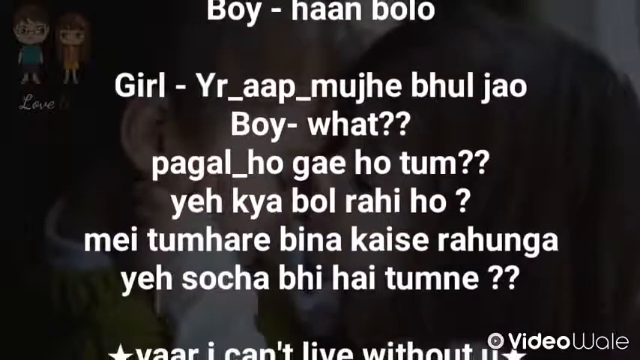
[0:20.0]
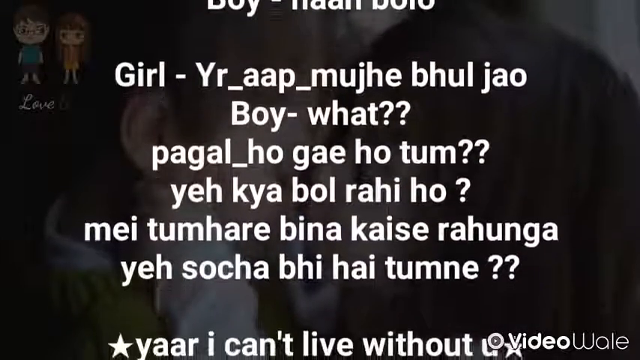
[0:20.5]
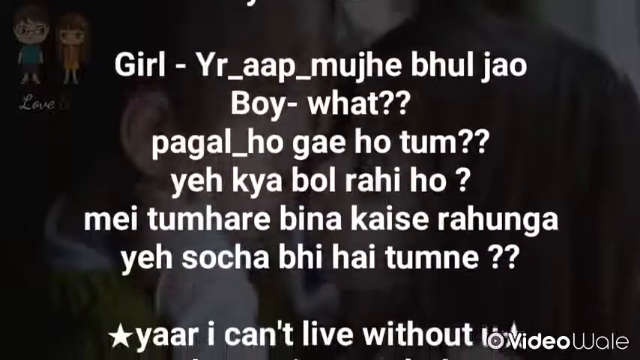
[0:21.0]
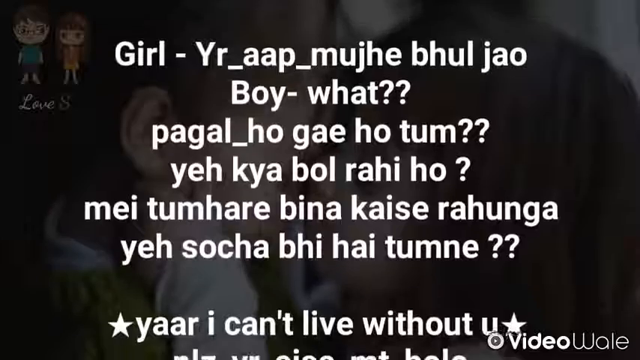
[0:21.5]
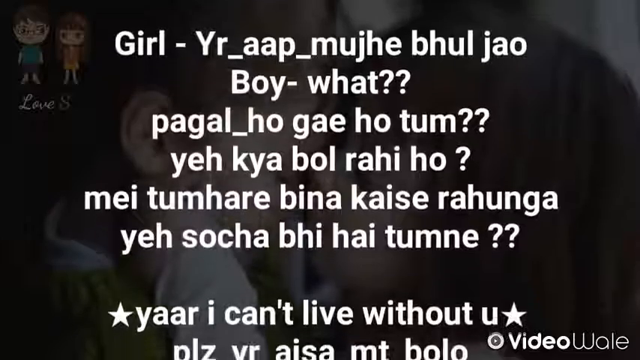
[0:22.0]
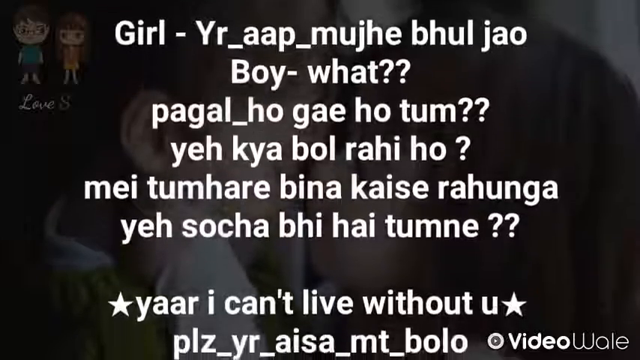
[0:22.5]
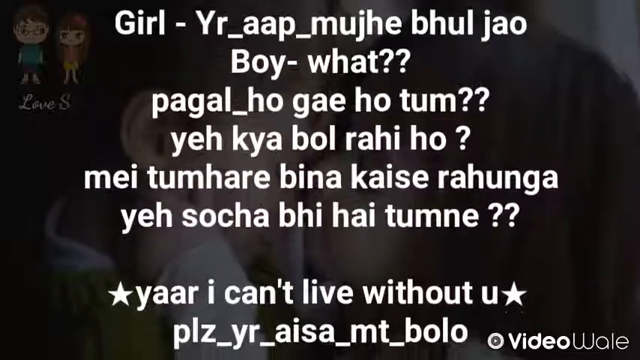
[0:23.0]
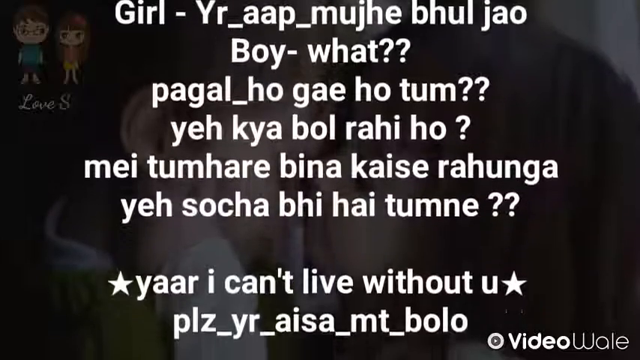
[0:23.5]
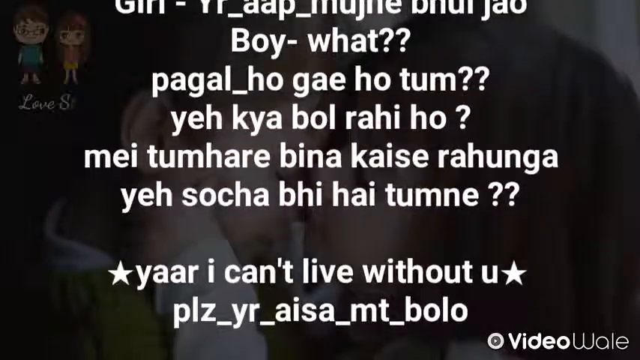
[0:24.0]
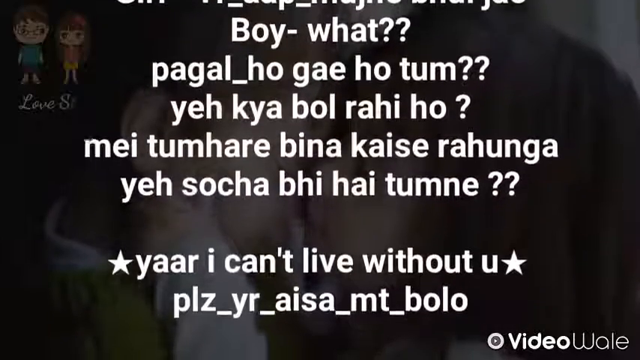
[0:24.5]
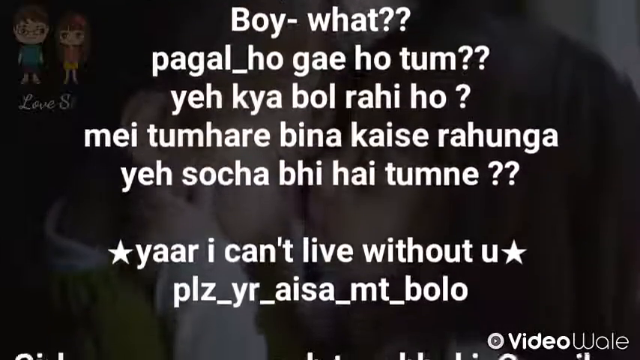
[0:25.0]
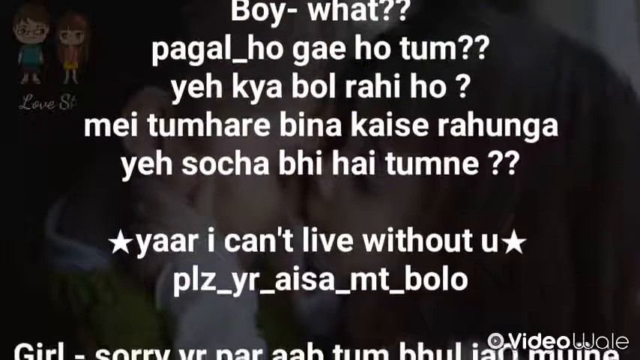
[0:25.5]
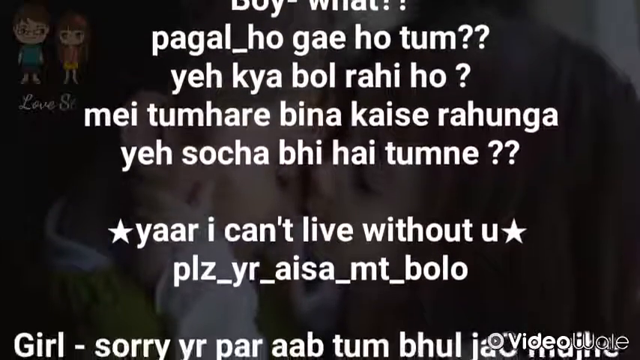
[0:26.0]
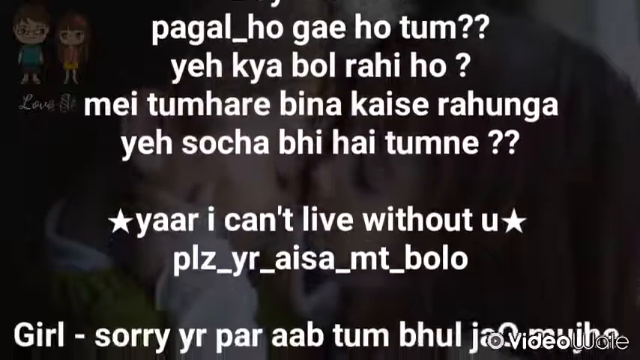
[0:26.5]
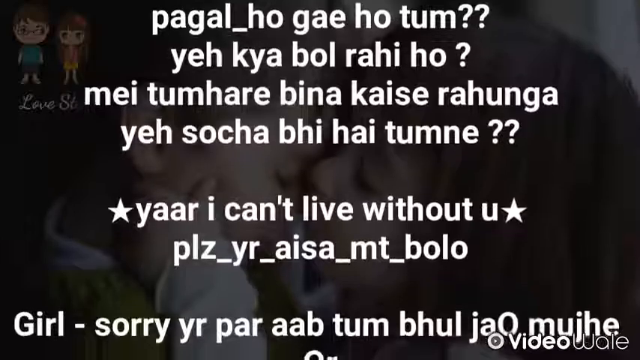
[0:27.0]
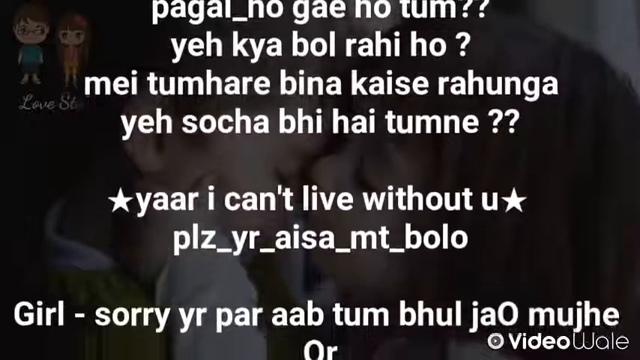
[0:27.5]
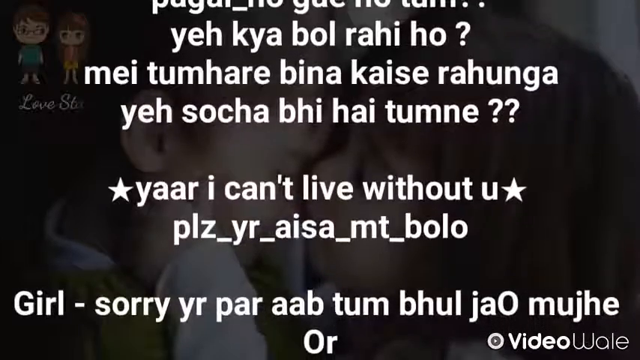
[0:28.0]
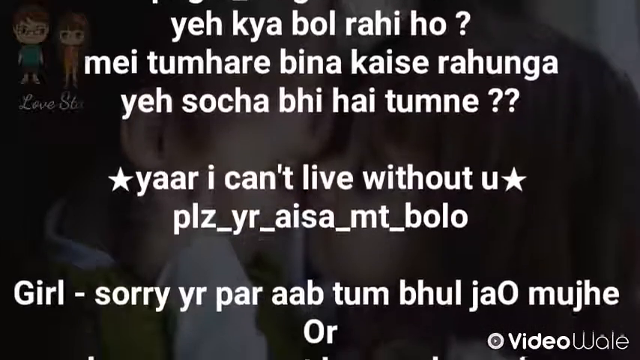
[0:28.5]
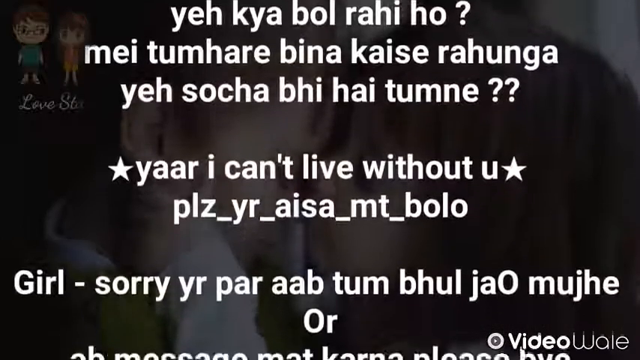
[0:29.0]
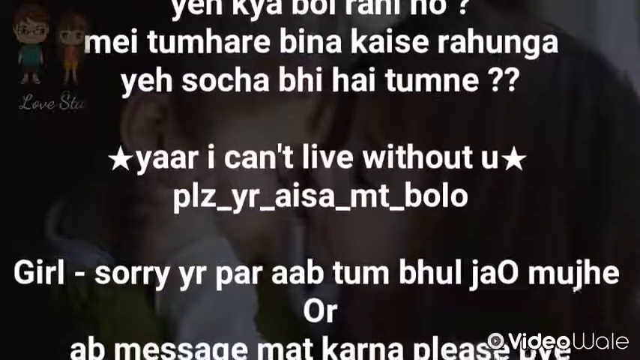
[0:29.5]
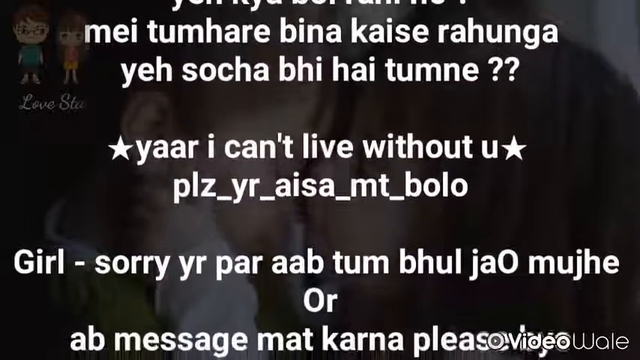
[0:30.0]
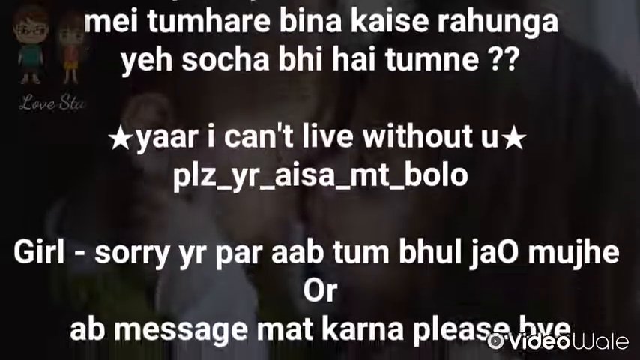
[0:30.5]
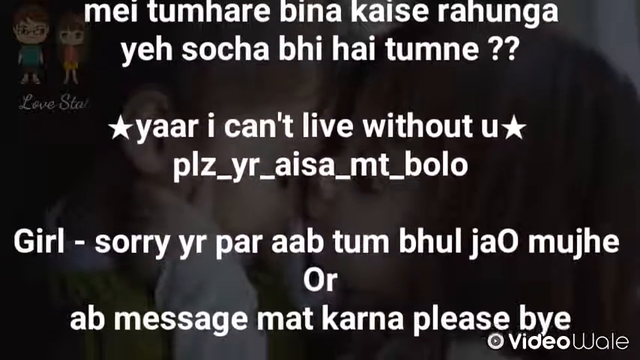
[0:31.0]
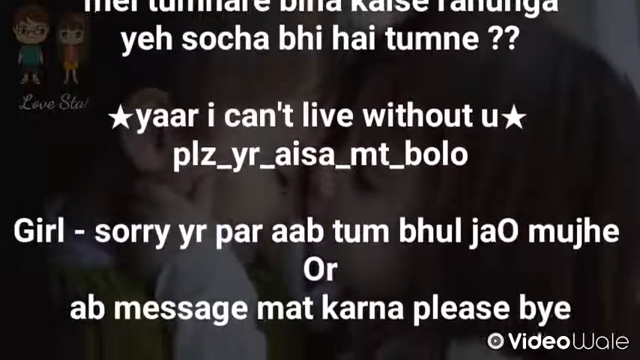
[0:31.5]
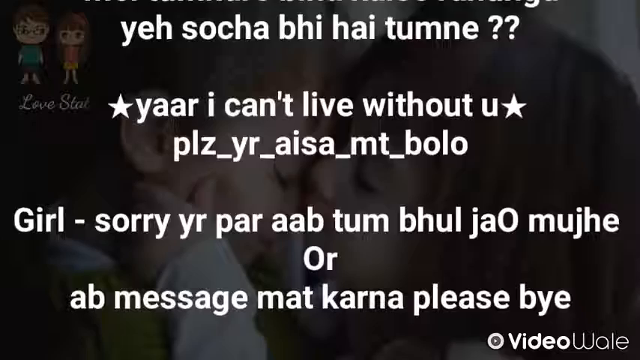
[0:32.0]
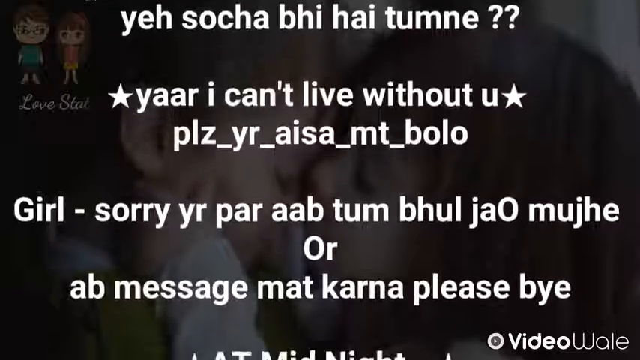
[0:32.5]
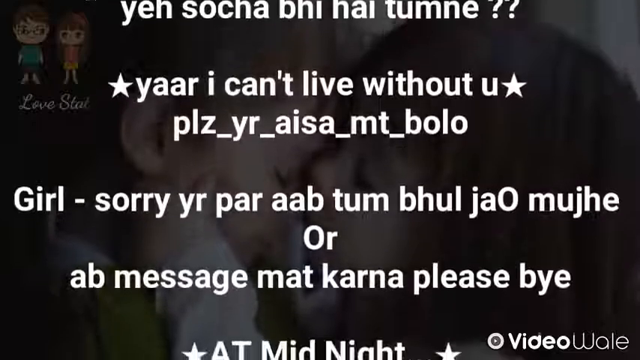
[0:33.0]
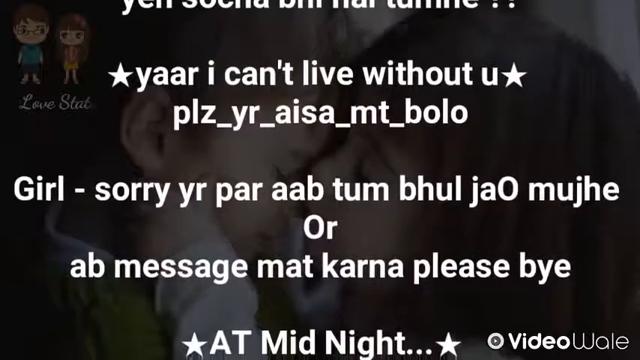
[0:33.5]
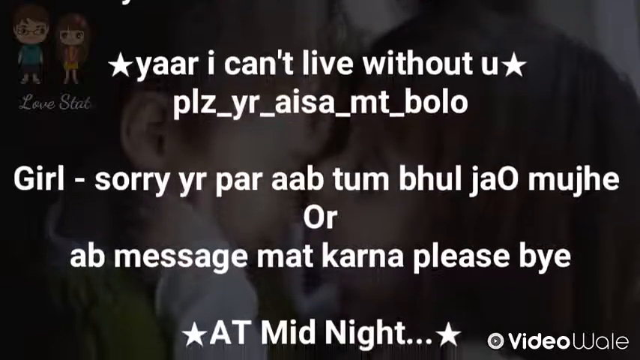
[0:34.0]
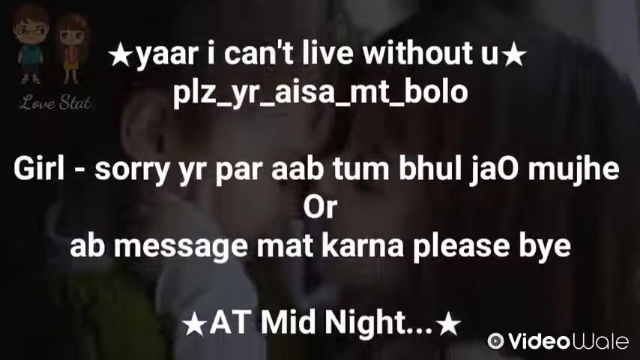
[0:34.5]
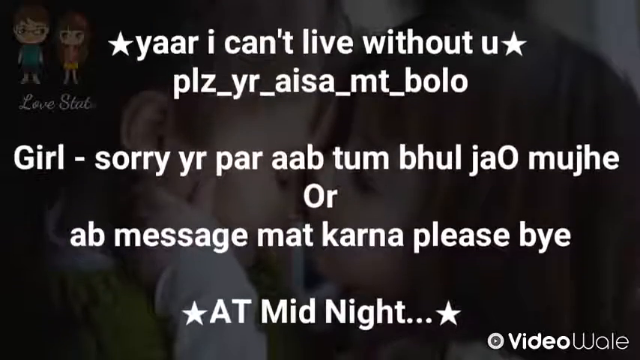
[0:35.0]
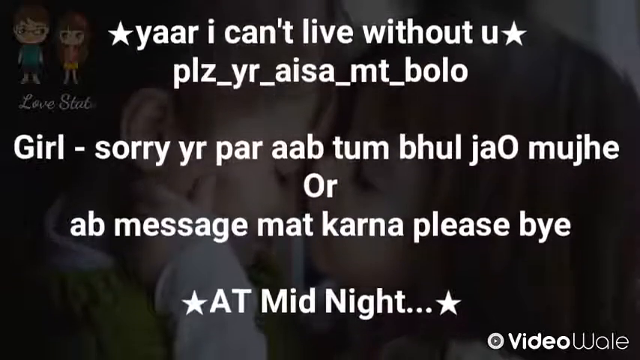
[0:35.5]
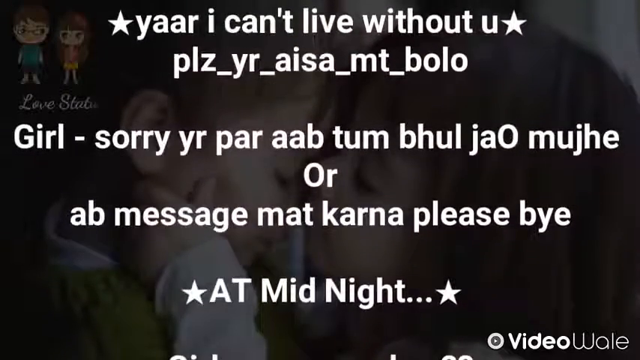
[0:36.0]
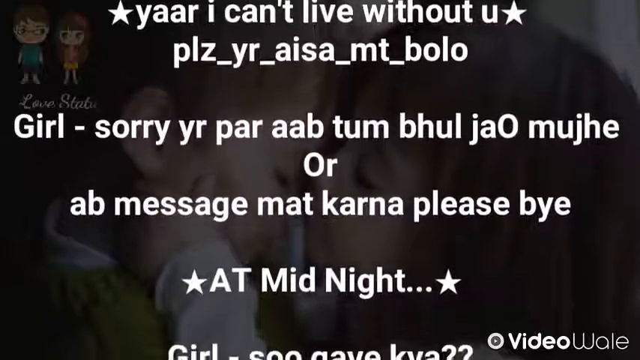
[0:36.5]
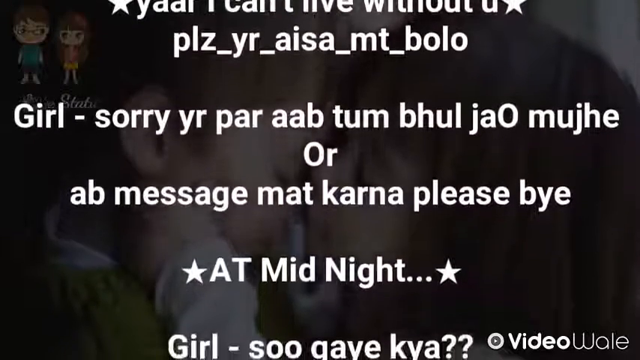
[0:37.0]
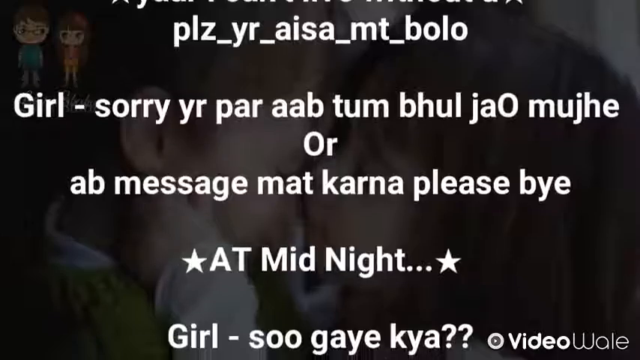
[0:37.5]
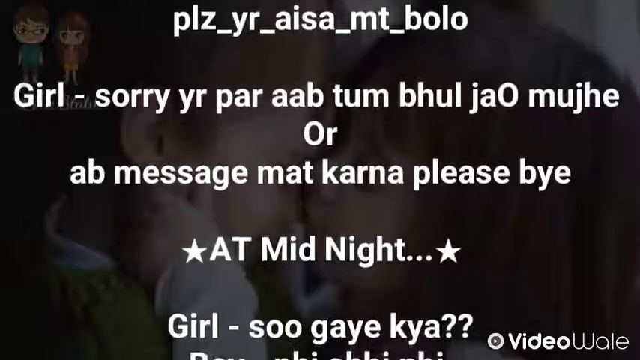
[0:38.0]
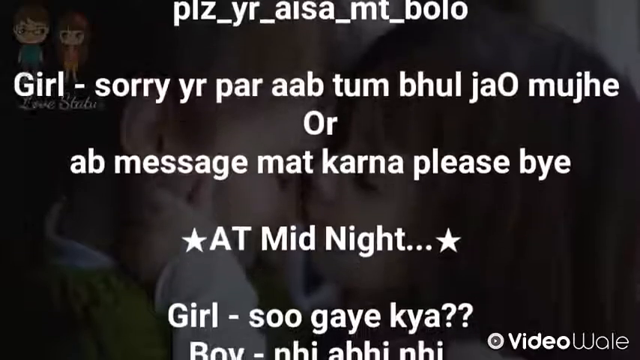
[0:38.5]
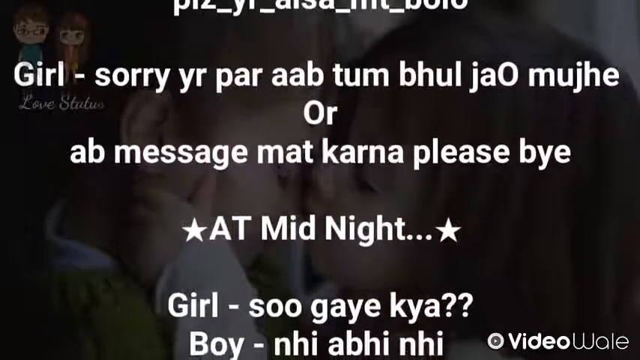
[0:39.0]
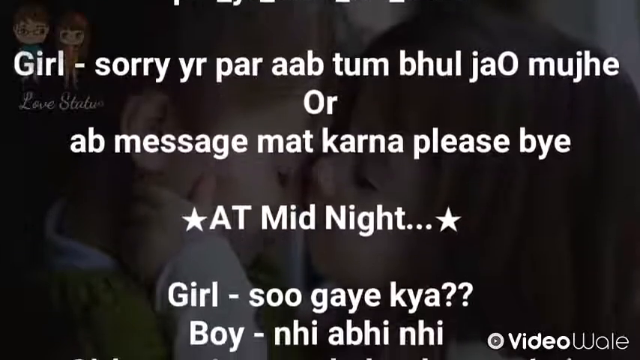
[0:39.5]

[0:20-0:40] The same static background image shows a very young girl on the right and a boy on the left, both with white skin. The left side of the girl's face and the right side of the boy's face are visible, and the girl has her left hand on the boy's cheek. In the top left are two small cartoon drawings, one of the boy and one of the girl. The drawn boy has a sort of blue-greenish shirt and blue shorts; the drawn girl has an orange shirt and yellow shorts. Bold white text in an unidentified foreign language appears in the middle of the video and slowly moves upward toward the top of the screen while the background image stays static. Some of the words are in English, such as "at midnight". The last words shown are subtitles for the boy and the girl talking to each other.